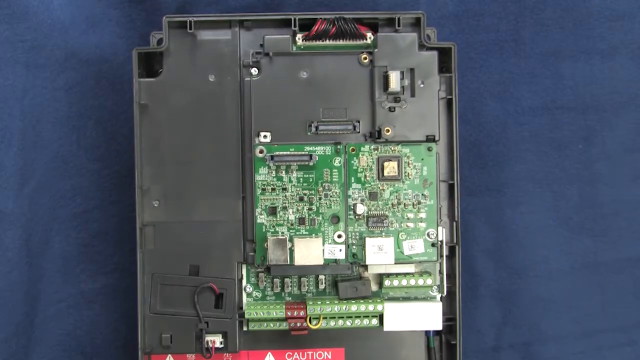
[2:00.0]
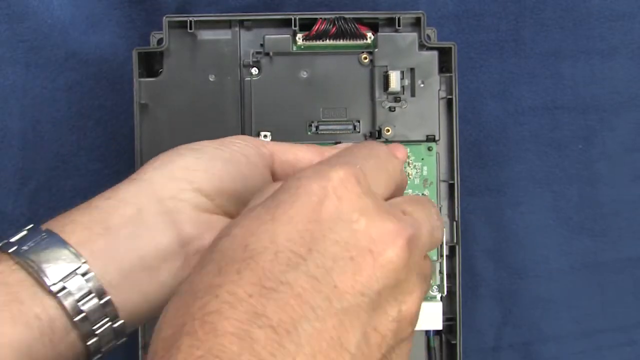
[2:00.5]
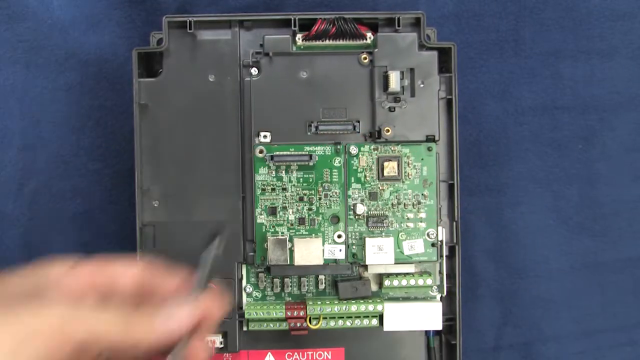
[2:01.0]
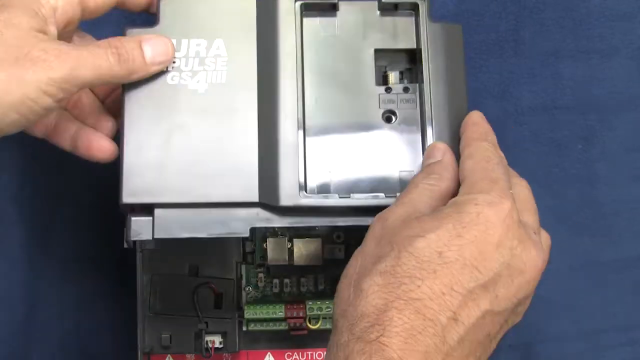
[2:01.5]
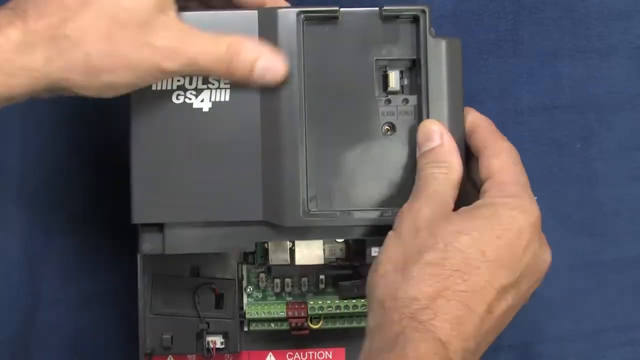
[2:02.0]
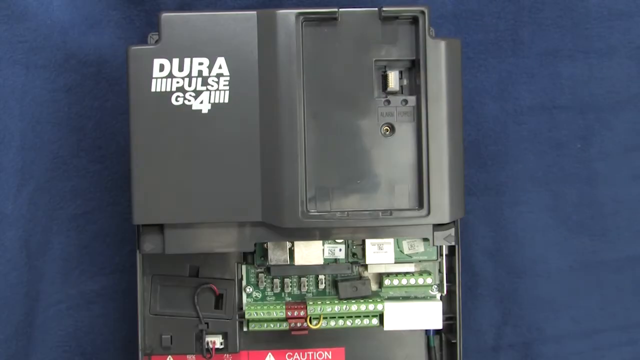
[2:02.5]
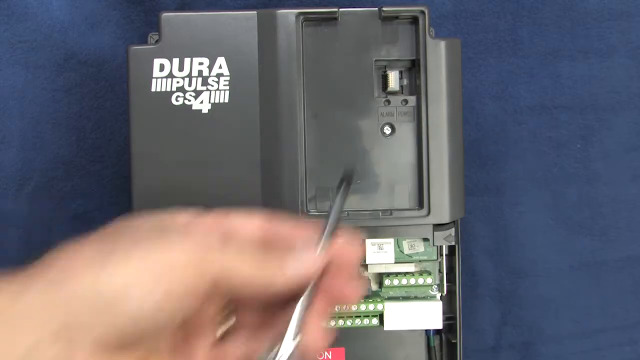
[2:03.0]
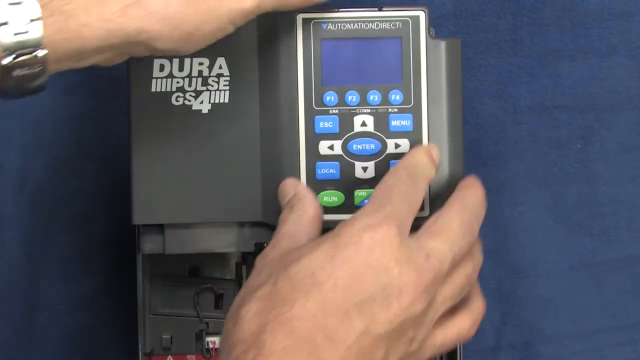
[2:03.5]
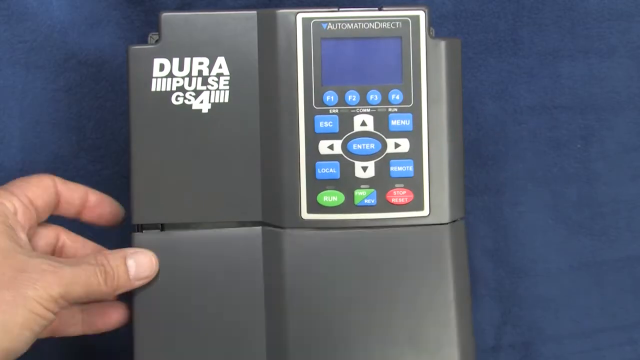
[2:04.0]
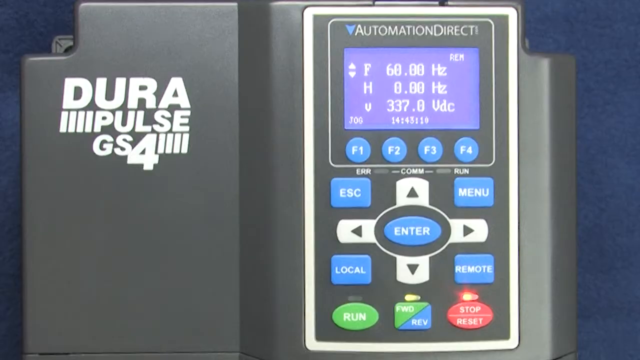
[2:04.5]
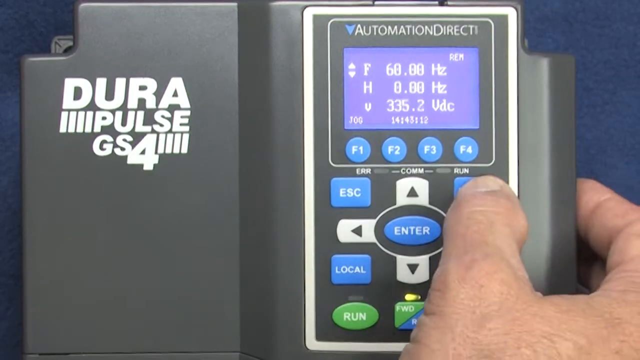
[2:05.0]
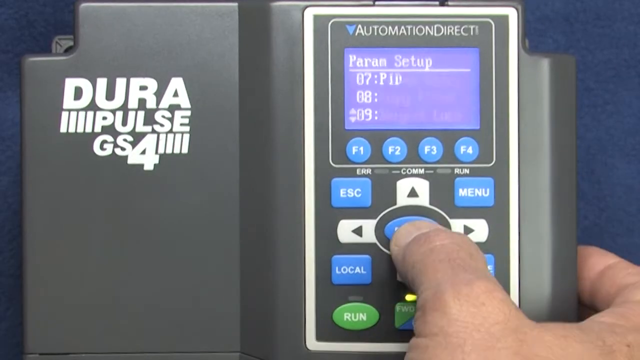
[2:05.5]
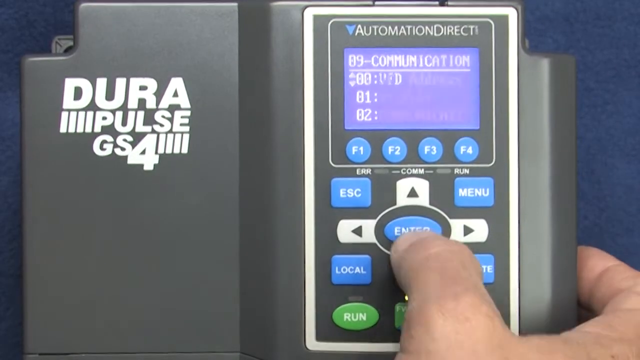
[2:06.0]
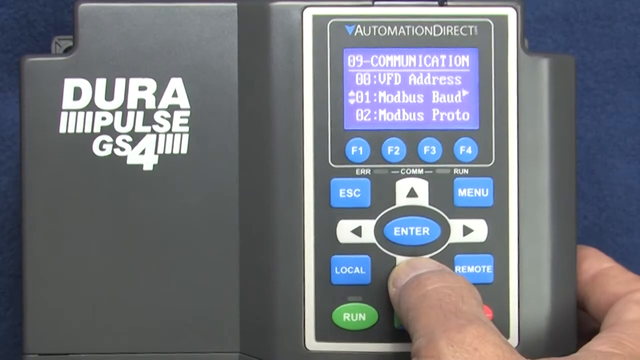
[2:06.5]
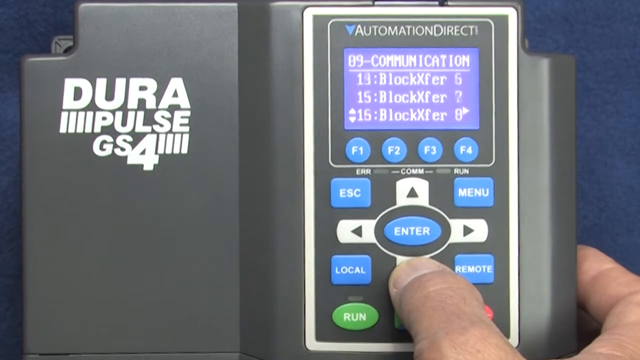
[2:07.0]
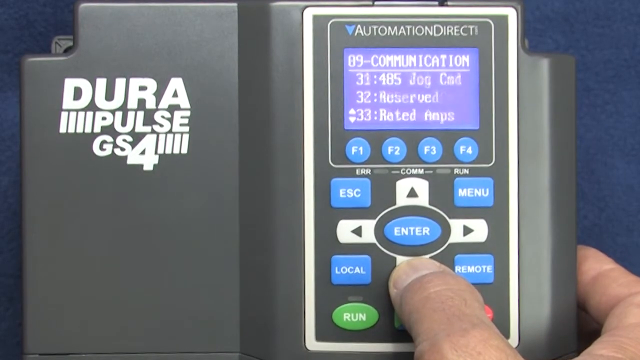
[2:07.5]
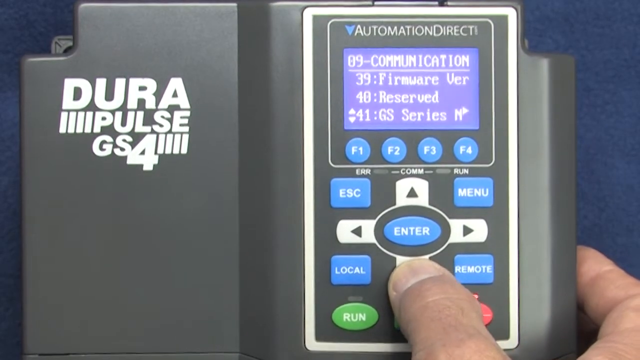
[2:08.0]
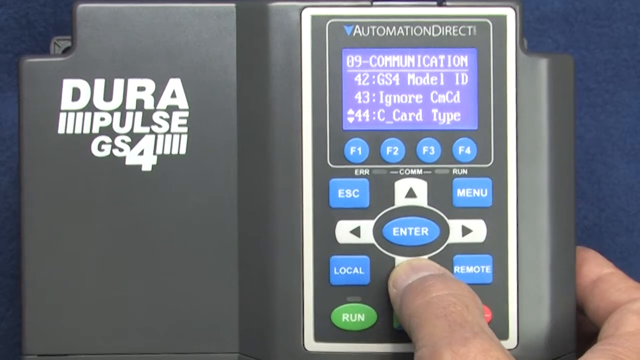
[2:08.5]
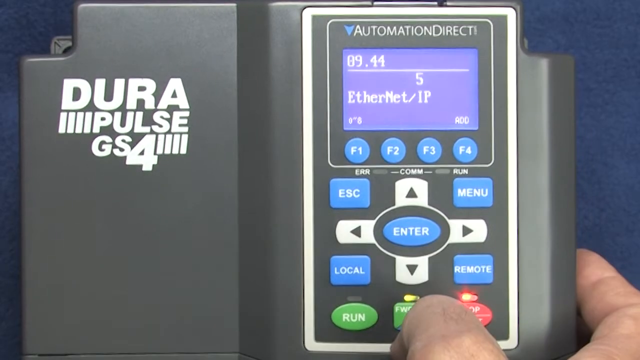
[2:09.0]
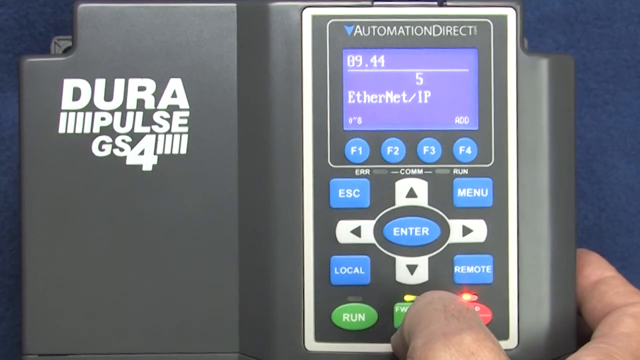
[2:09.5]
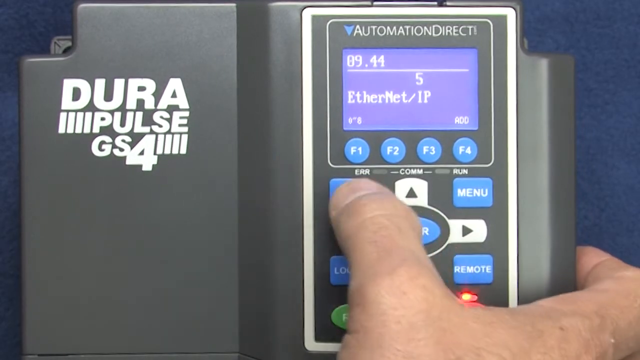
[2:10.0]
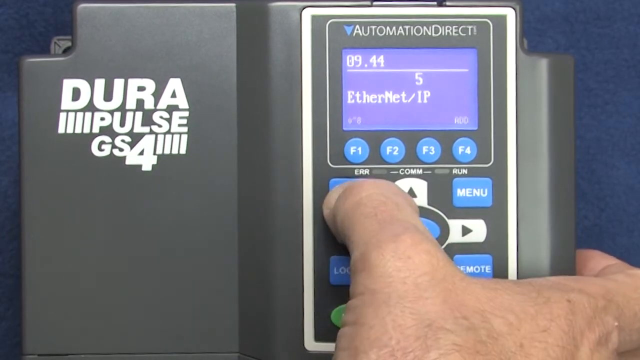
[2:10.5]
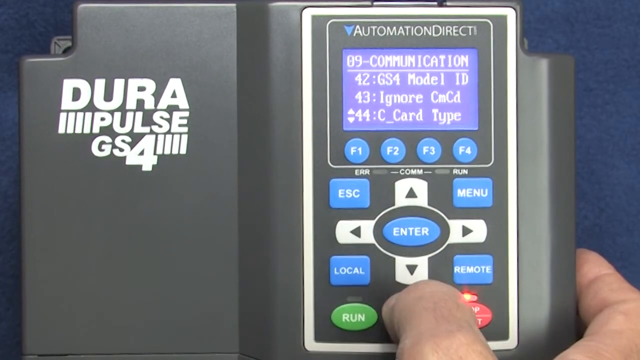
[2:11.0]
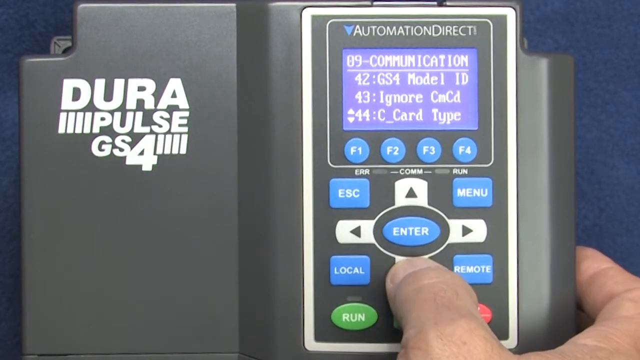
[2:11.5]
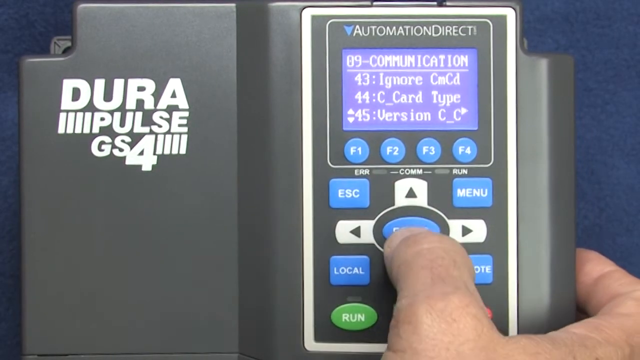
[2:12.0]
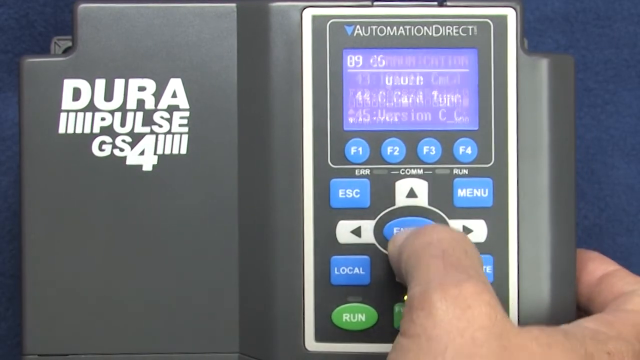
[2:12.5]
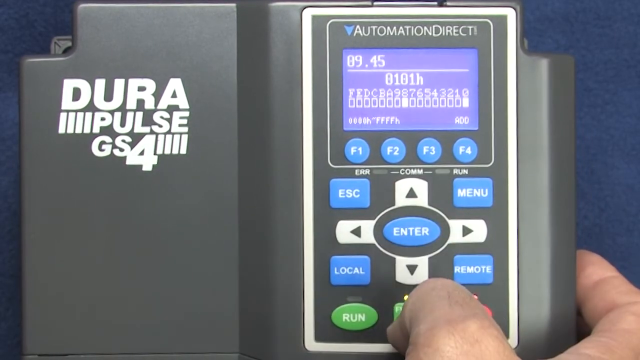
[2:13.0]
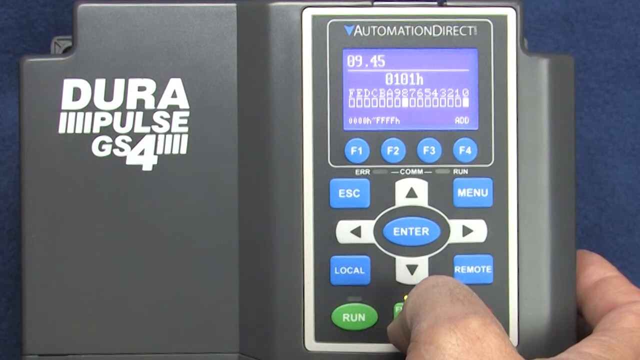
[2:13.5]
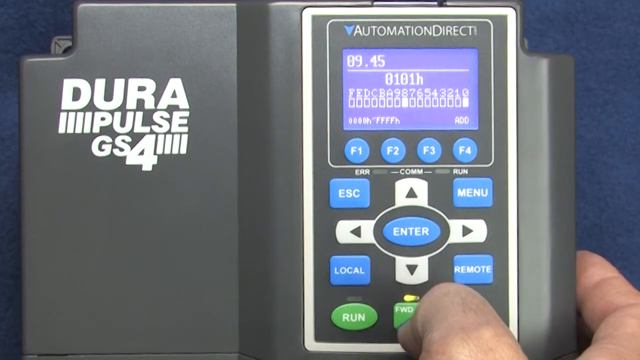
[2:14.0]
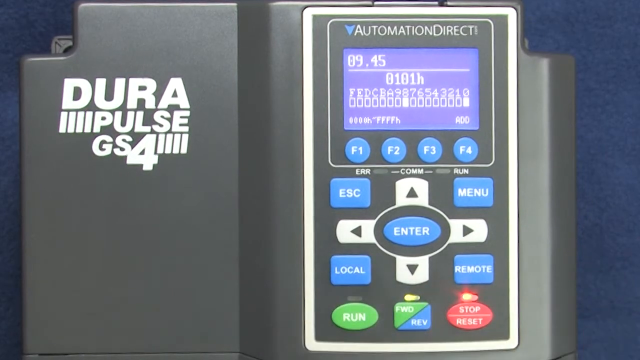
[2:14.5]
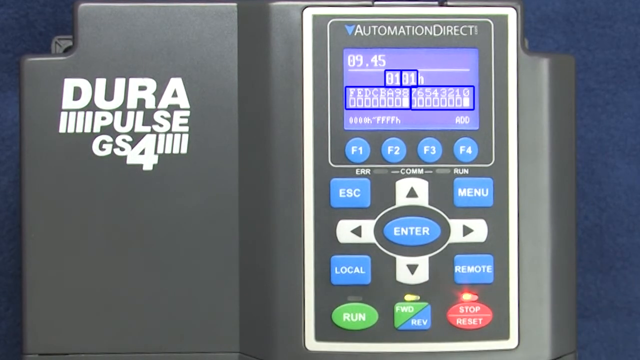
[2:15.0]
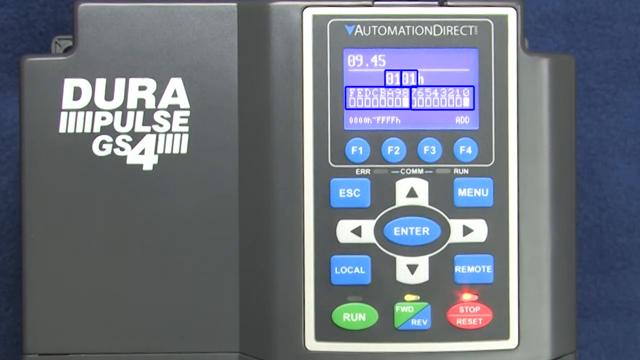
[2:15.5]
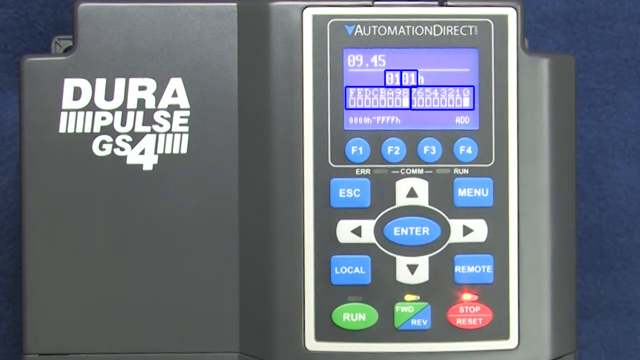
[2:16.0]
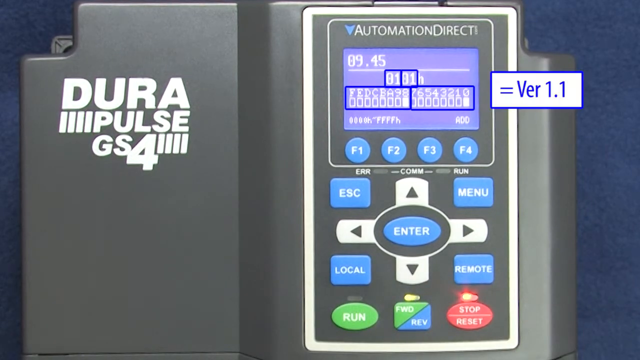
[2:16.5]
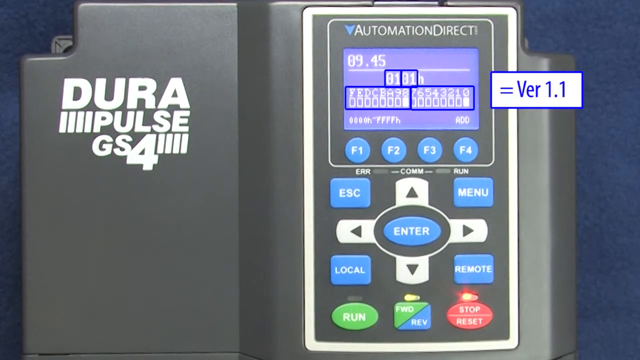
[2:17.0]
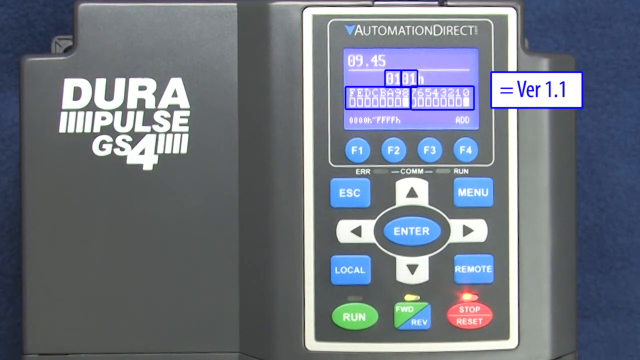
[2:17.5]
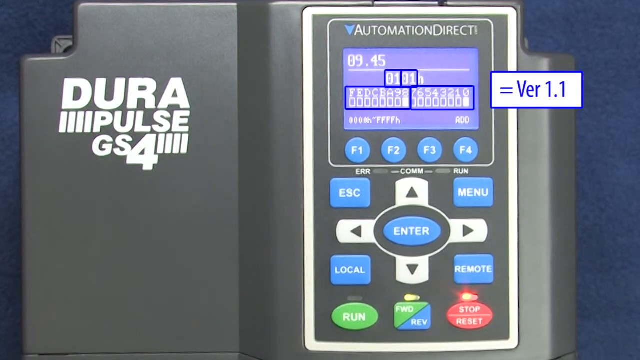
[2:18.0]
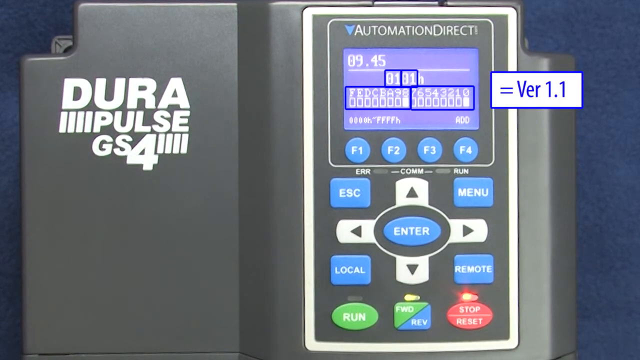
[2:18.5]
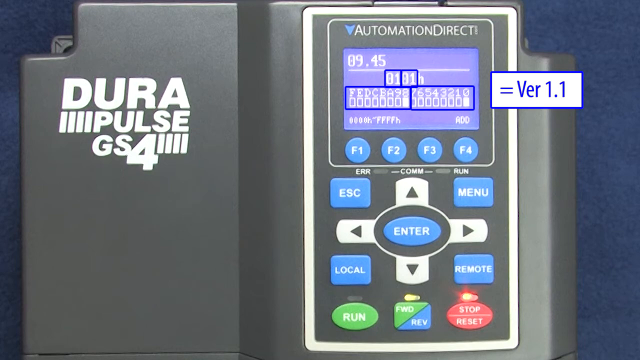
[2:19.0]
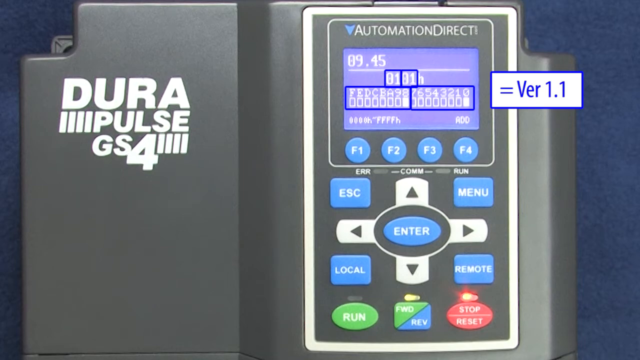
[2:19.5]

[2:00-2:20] Someone puts the device back together; the card appears to have been upgraded, and the remote on the front is now being programmed. Enter is pressed, and the buttons include escape, menu, enter, local remote, forward, reverse, run, stop and reset. The equipment is first shown without the back on, then the back or front is screwed back on. An AutomationDirect screen is put on a display screen, and a man scrolls down to communication, apparently updating the version, which reads DuraPulse GS4 version 1.1. The cards are now side by side instead of on top of each other. There is a green card that looks just like a computer chip, and opened up it has black and red cords and wires in different ports.